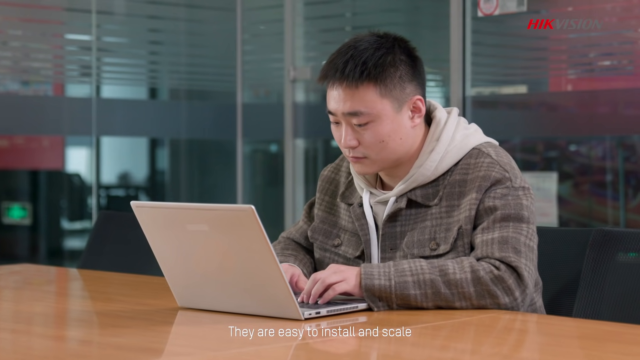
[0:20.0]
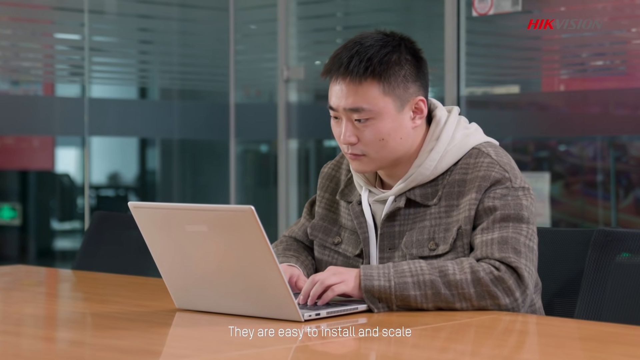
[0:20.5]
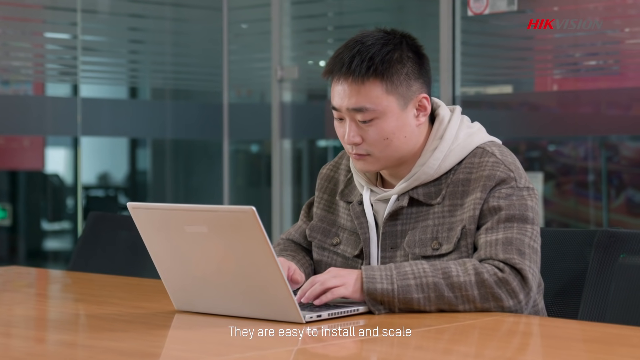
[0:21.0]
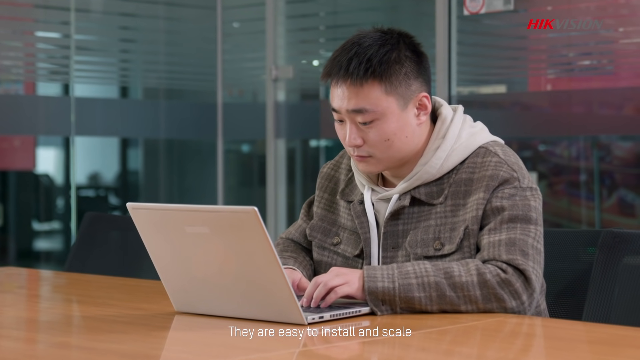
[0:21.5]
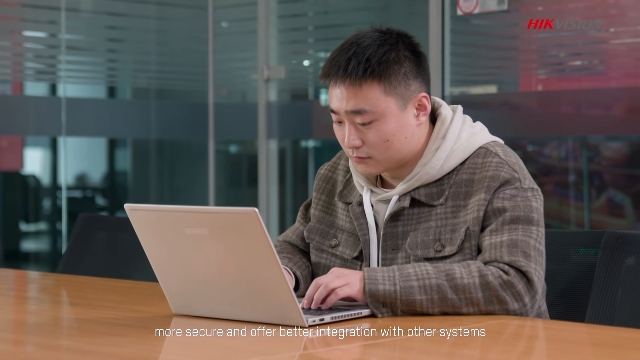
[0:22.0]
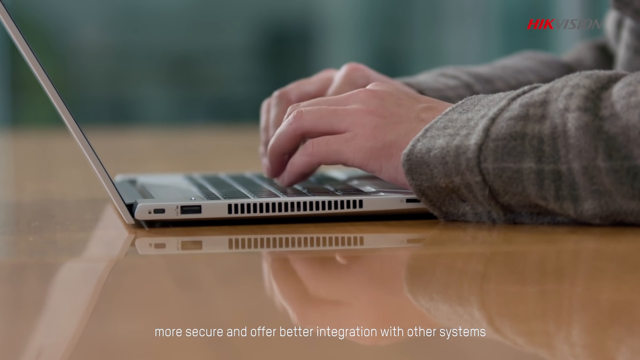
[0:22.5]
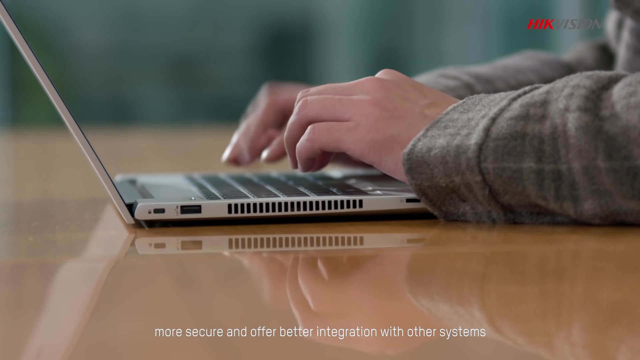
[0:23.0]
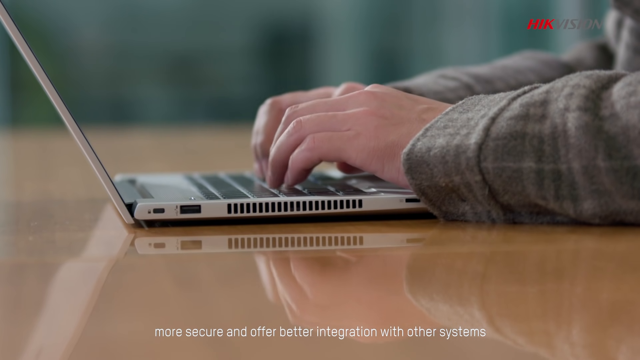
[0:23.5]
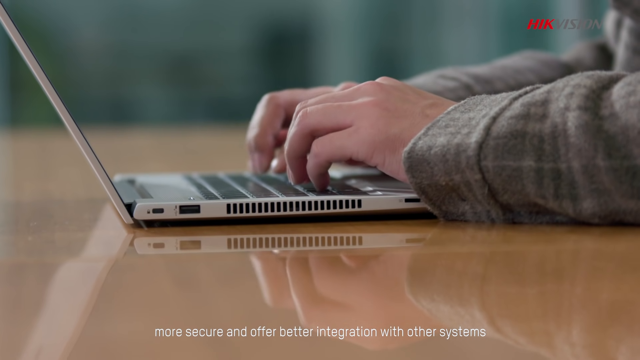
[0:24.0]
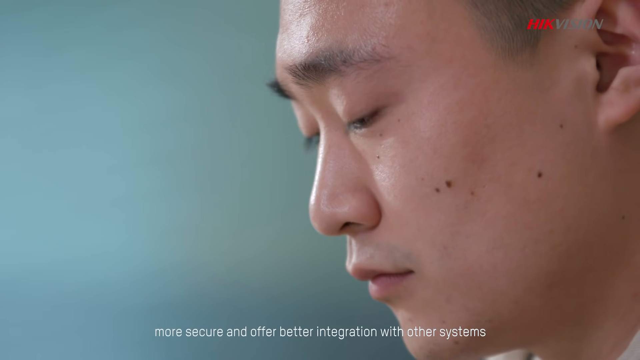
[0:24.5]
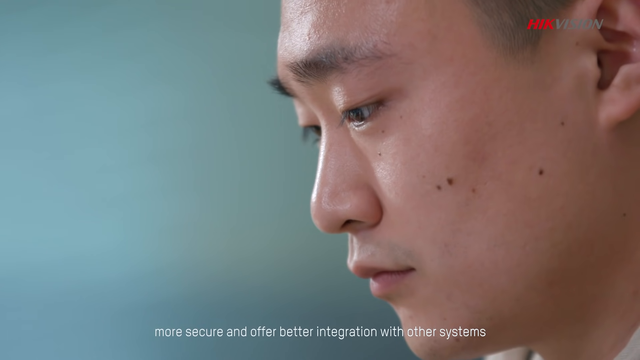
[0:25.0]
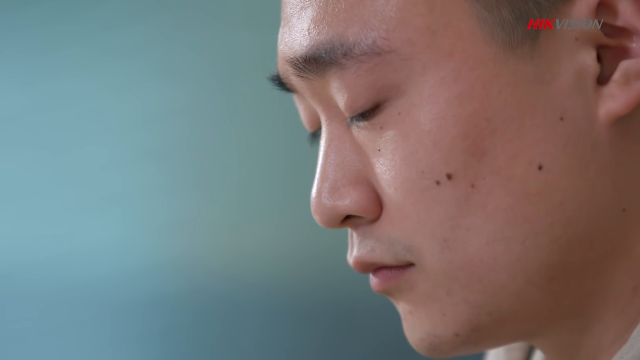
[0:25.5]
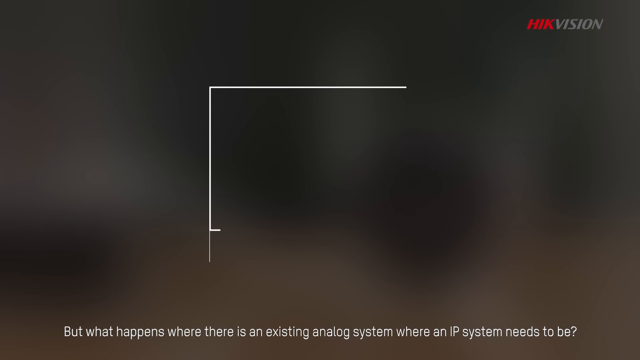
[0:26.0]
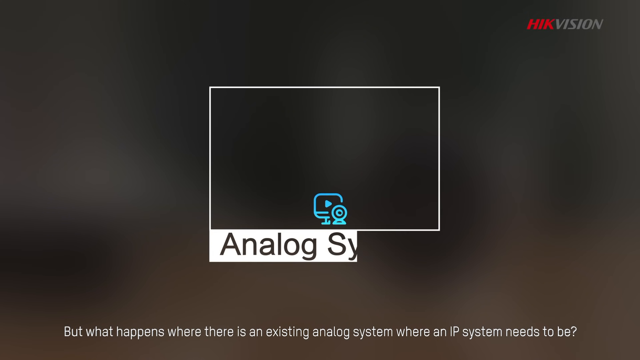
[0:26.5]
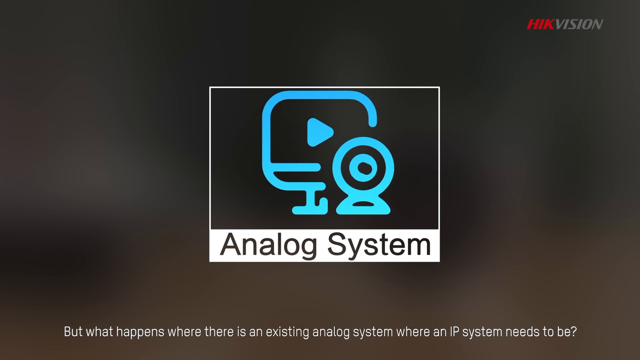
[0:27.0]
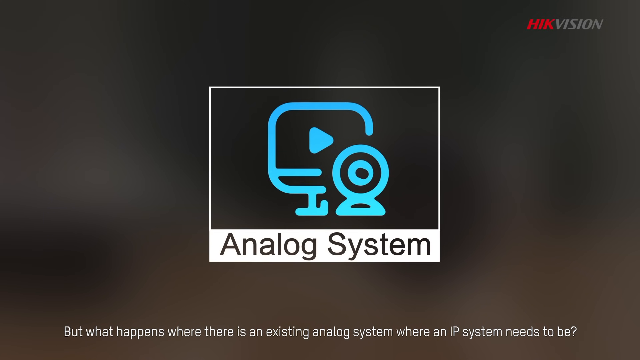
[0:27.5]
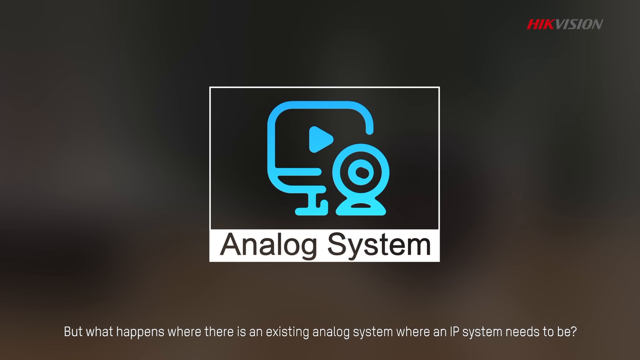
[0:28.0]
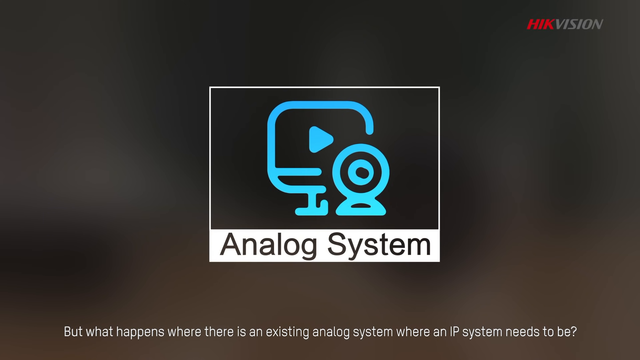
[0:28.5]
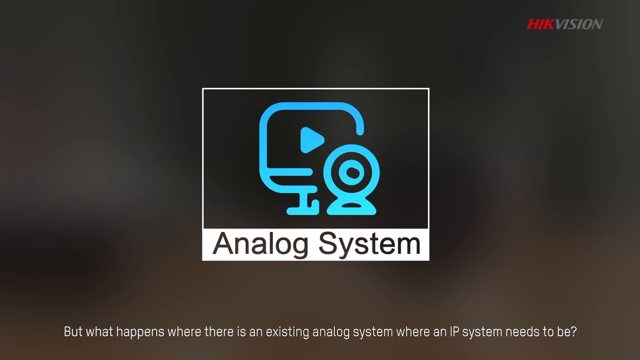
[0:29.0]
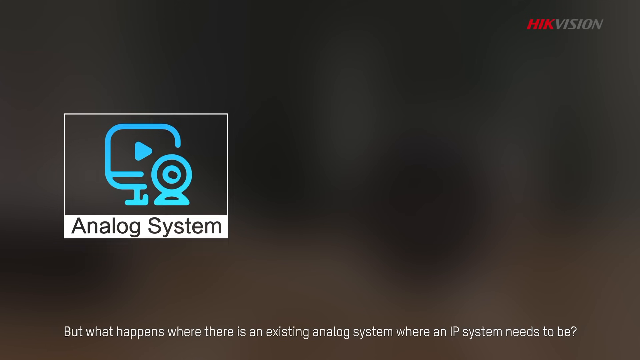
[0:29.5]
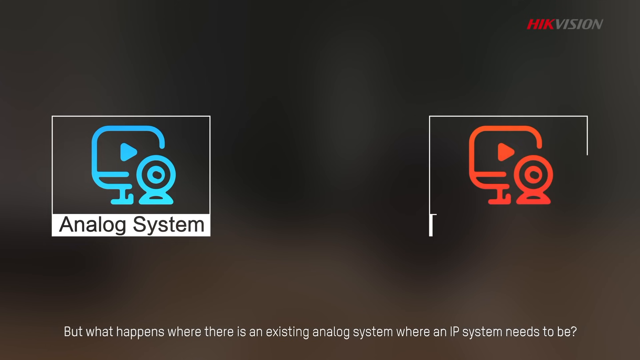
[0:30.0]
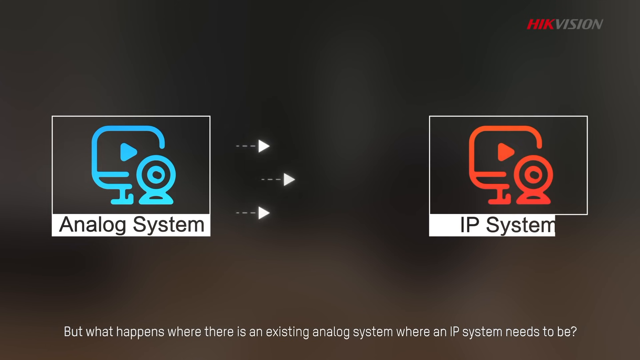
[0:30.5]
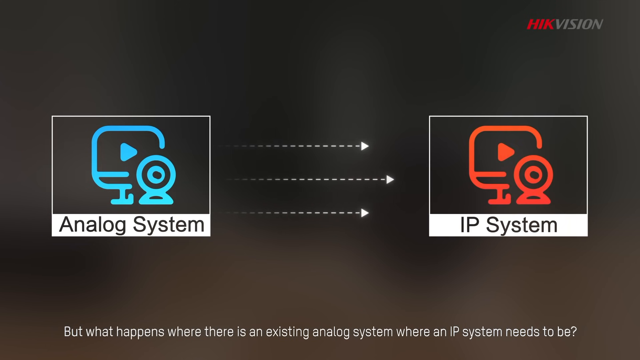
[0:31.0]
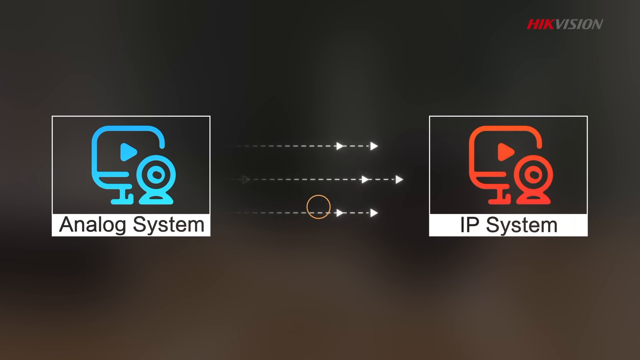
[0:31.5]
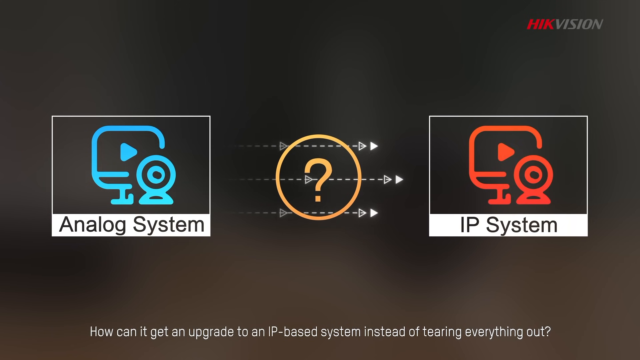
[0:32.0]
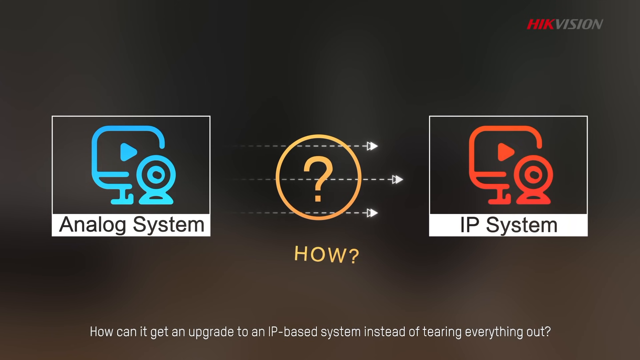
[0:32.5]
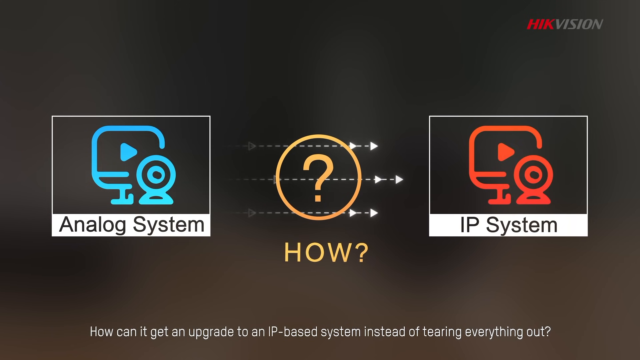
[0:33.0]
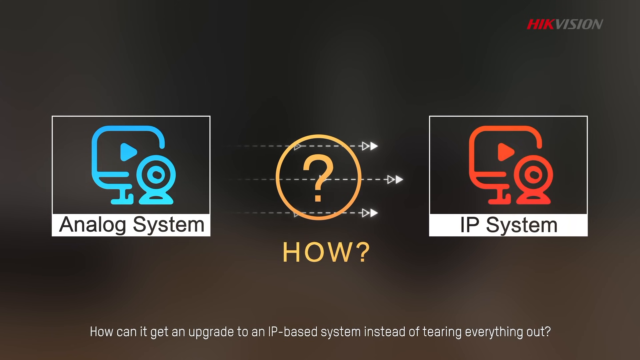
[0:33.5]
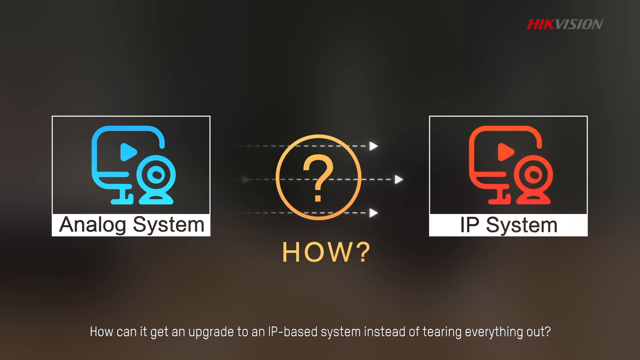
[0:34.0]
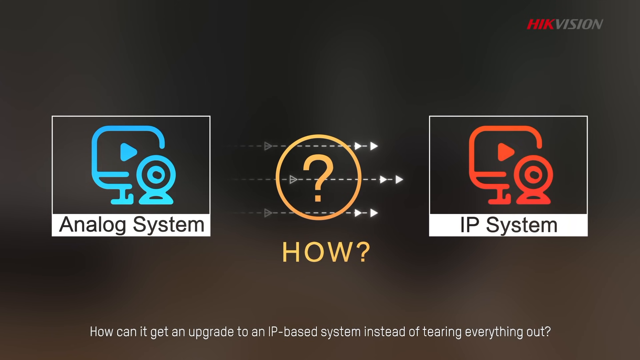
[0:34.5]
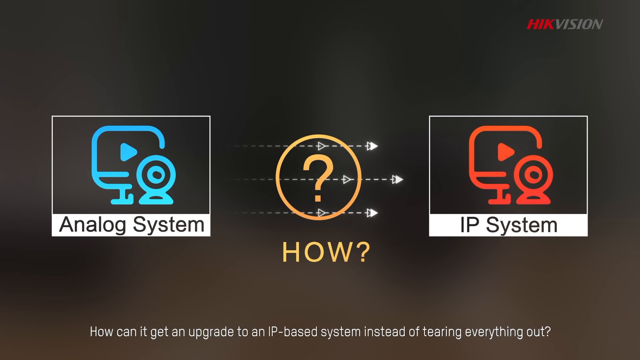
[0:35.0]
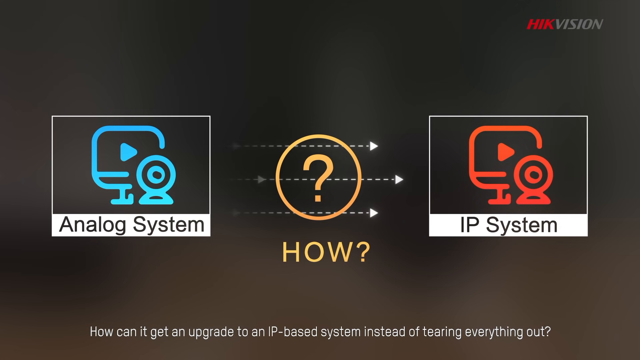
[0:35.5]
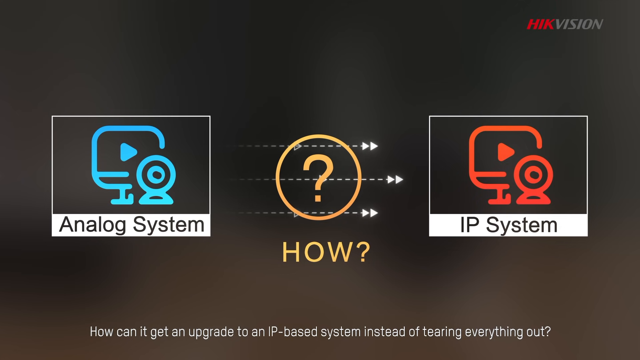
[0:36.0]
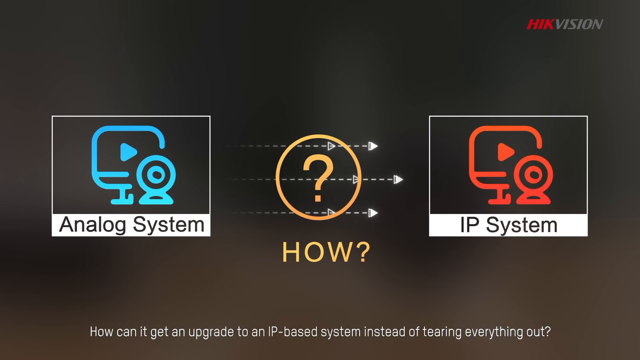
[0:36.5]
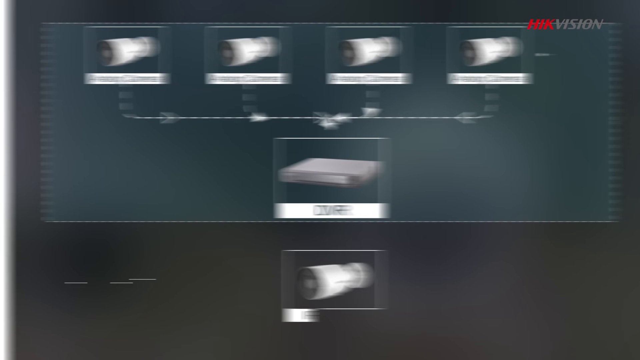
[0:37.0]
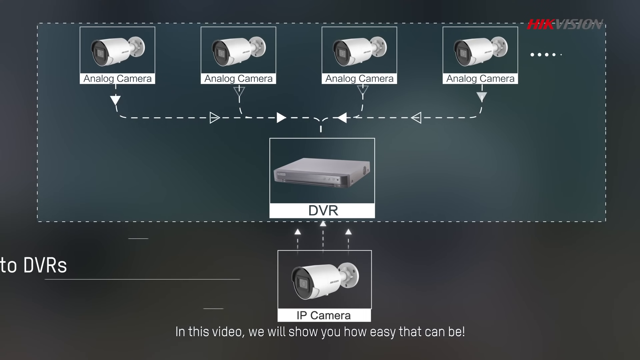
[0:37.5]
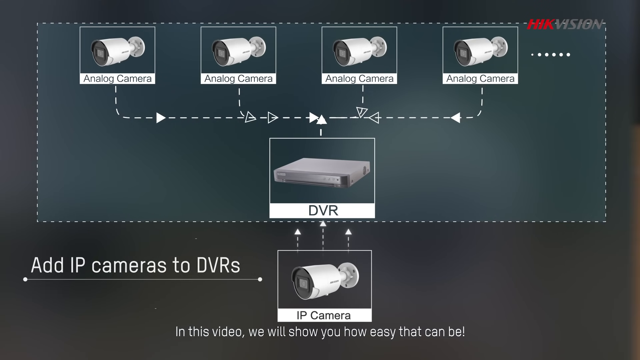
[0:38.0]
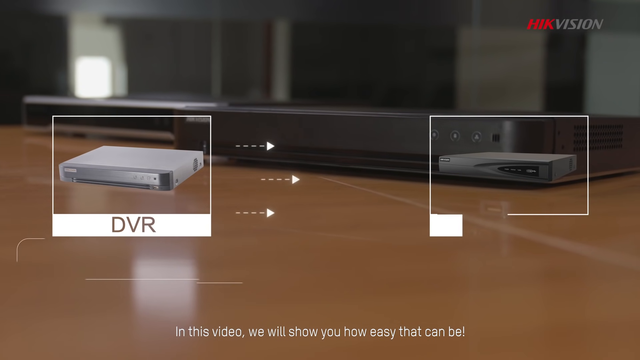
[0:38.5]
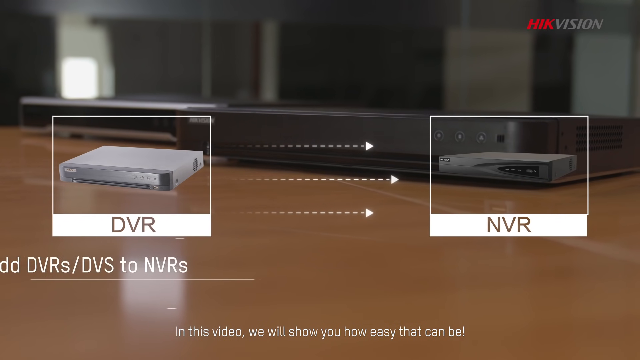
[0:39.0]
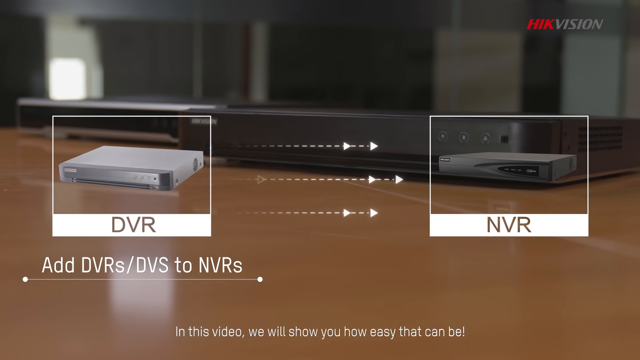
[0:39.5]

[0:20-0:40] An Asian man in his 30s or 40s, wearing a brown plaid jacket over a tan hoodie, is sitting at a large light brown wooden table with a white or silver laptop open and his hands at the keys. The setting is an office, like a conference room, with glass walls behind him and an office setting in the background. He is typing, and a close-up shows his hands typing, viewed from the left side of the laptop as if the camera is propped on the table. A close-up of the left side of his face shows his eyebrows, a bit of his forehead, his chin and his ears, but not his whole face. A screen then says "analog system," with a security camera logo in neon blue around the box. The same logo appears in red on the right-hand side with "IP system," and three dotted arrows point toward the IP system. A question mark in a circle appears with "how" underneath in a light orange color. The video then moves to DVR and NVR devices.